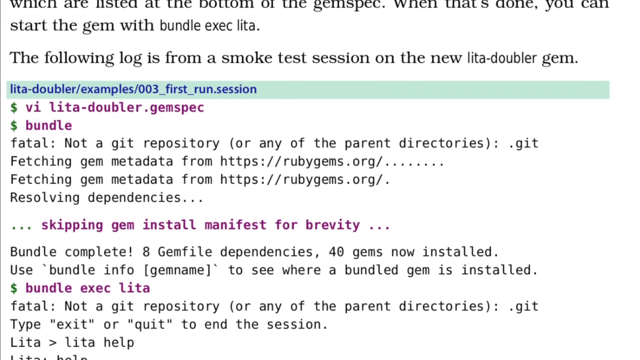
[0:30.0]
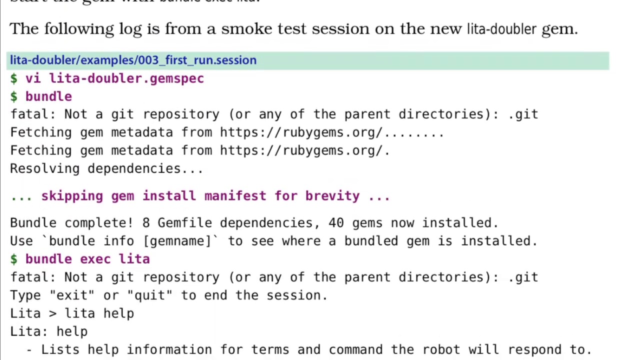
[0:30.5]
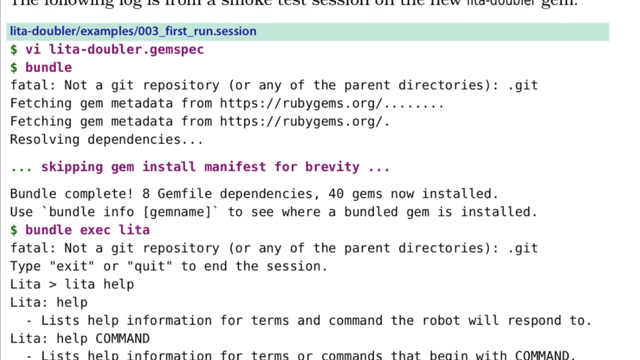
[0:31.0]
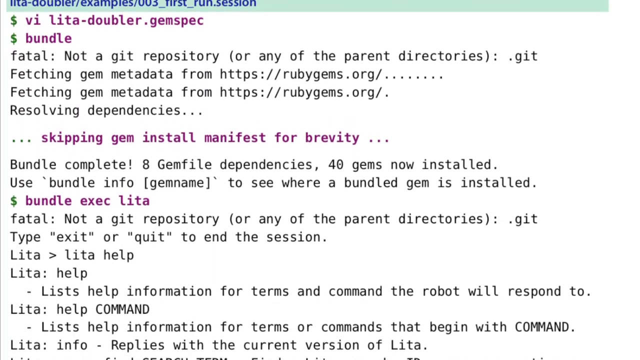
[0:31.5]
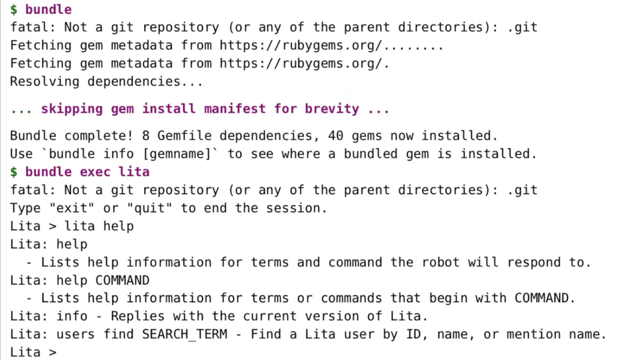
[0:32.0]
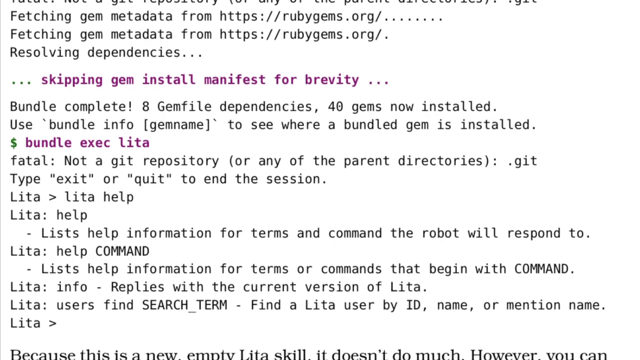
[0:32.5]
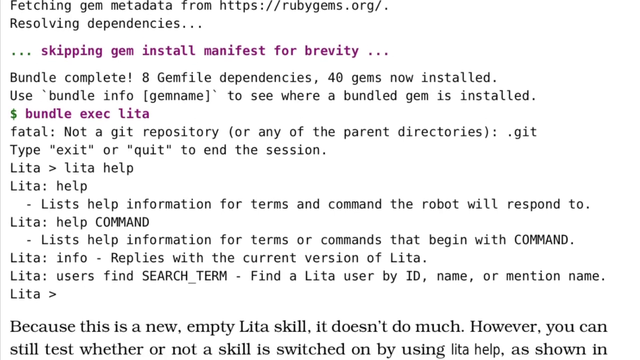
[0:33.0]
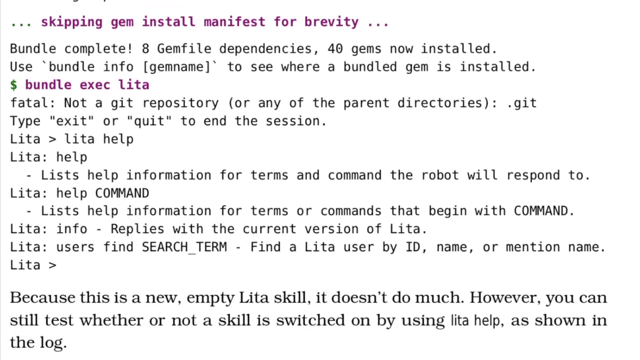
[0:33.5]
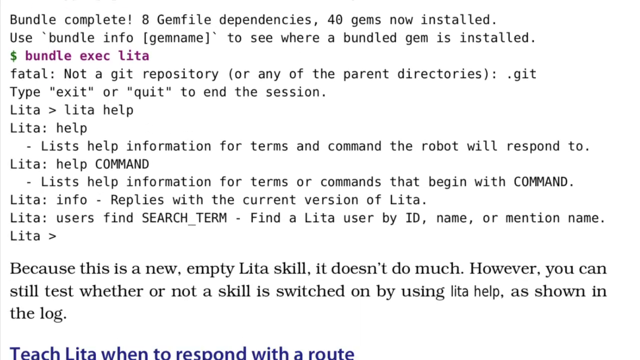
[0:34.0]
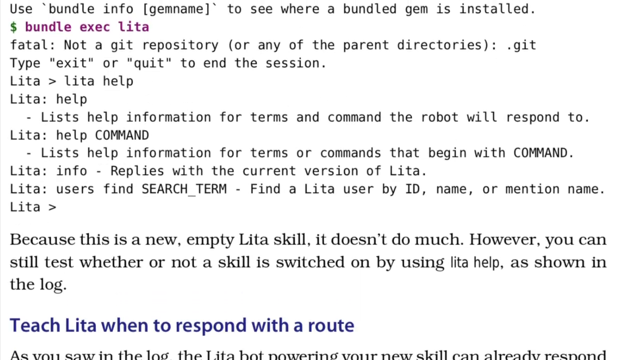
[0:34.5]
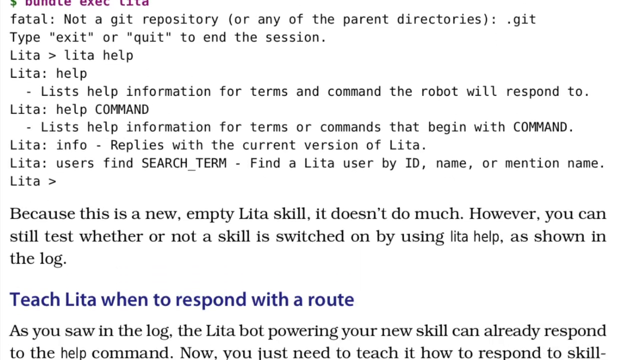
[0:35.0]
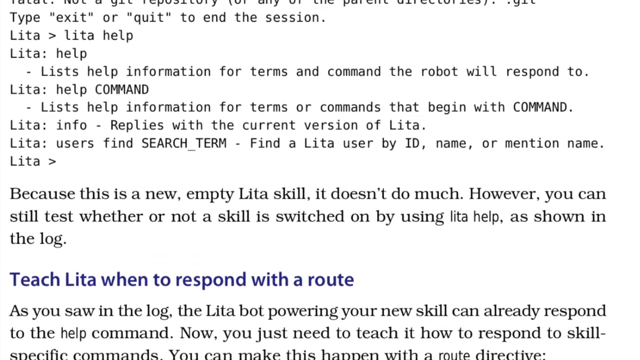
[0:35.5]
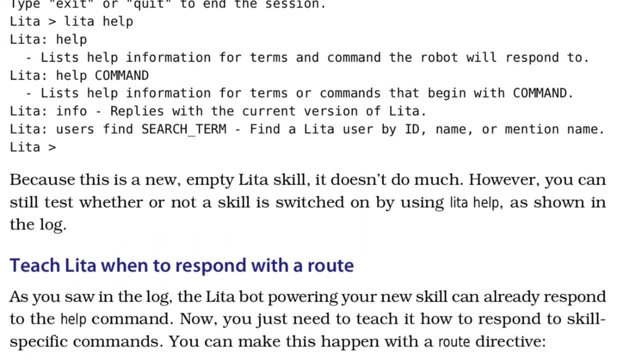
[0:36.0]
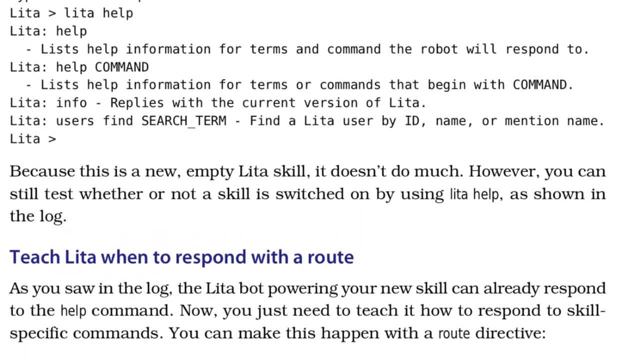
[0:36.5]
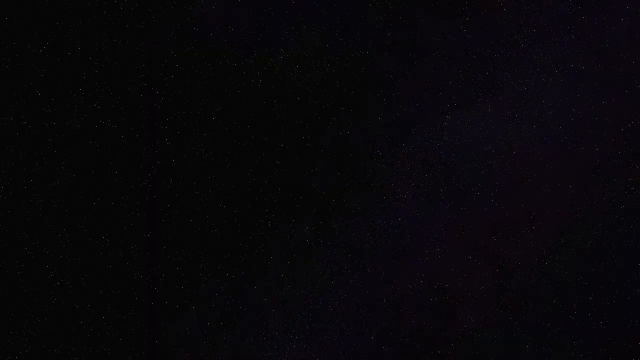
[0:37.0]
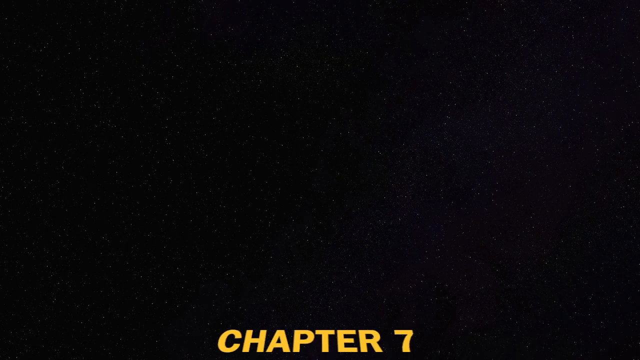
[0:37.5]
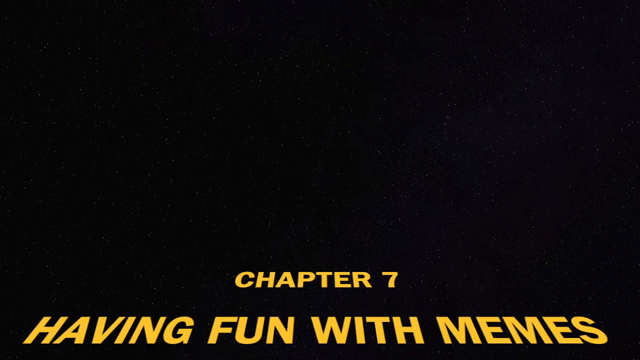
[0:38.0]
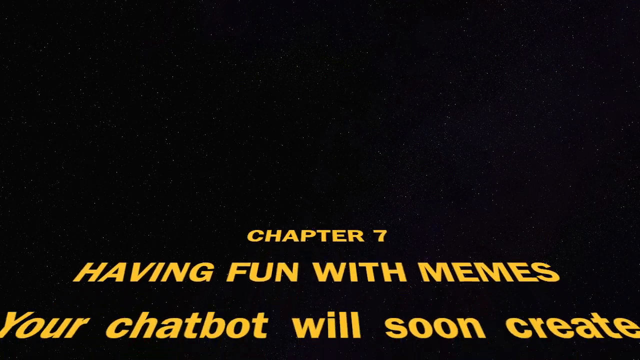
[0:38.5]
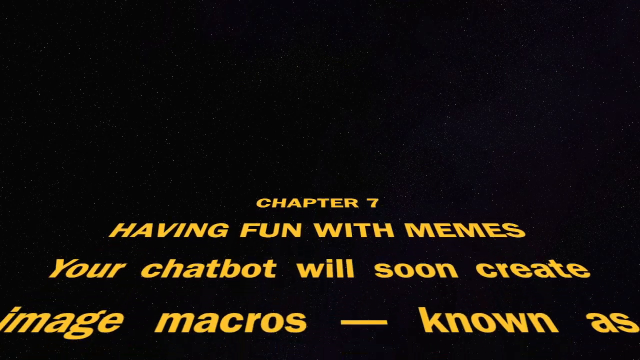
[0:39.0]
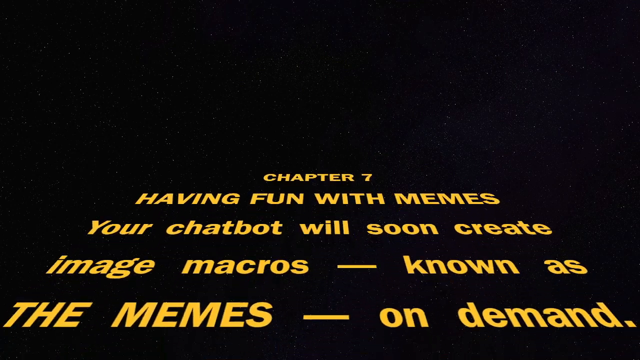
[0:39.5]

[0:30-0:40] A white page with black text appears. The text at the top reads "which are listed at the bottom of the gem spec. When that's done, you can start the gem with bundle exec lita. The following log is from a smoke test session on the new lita-doubler gem." This is followed by what appears to be code for lita-doubler.gemspec, in purple and black text. The page scrolls up and continues with code, ending with the text "because this is a new empty lita skill, it doesn't do much. However, you can still test whether or not a skill is switched on by using lita help, as shown in the log."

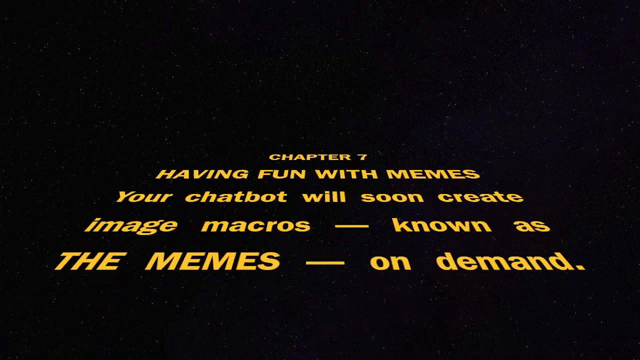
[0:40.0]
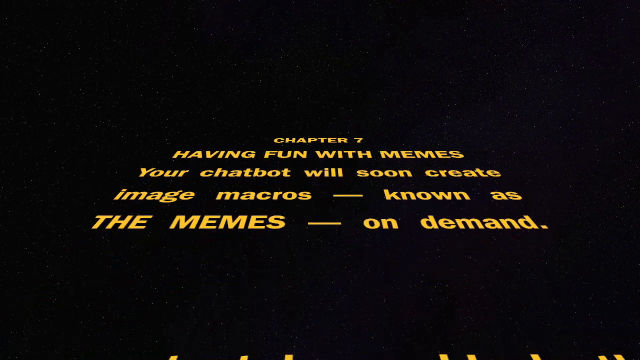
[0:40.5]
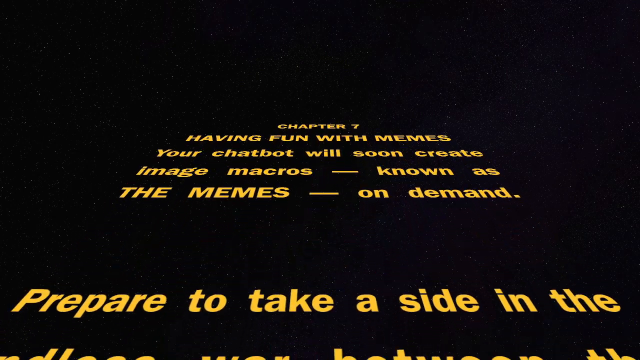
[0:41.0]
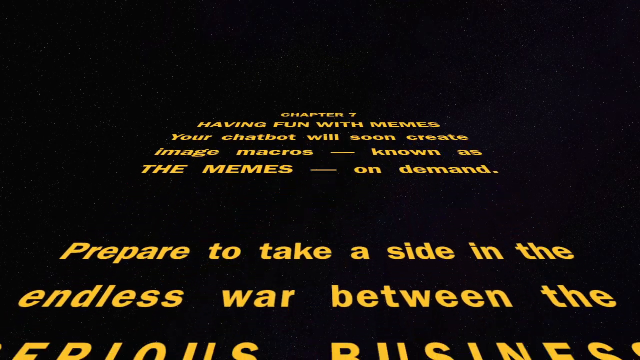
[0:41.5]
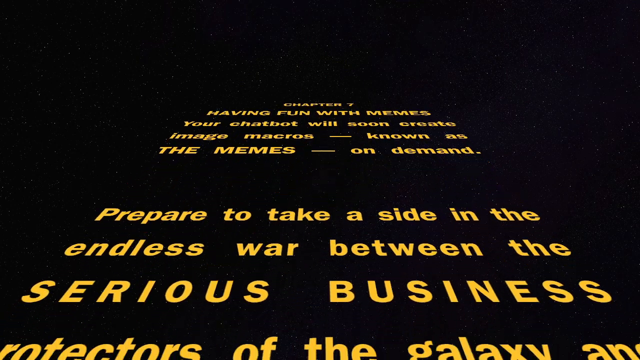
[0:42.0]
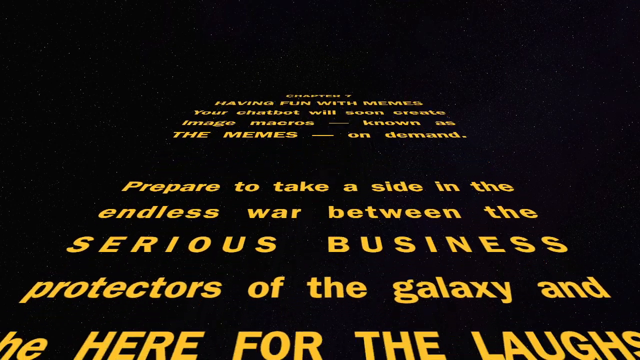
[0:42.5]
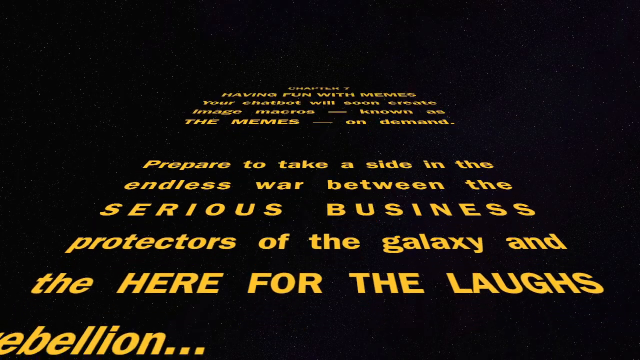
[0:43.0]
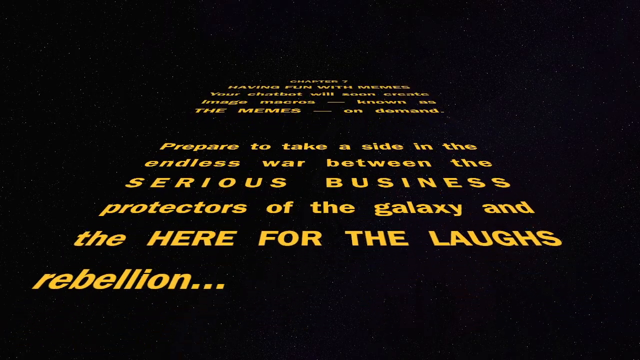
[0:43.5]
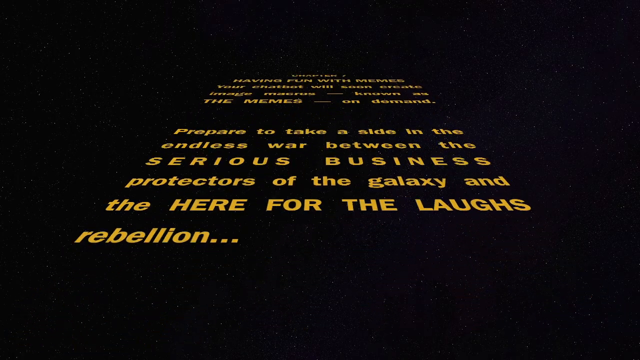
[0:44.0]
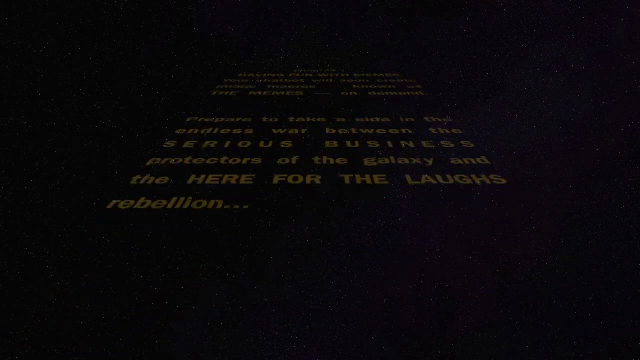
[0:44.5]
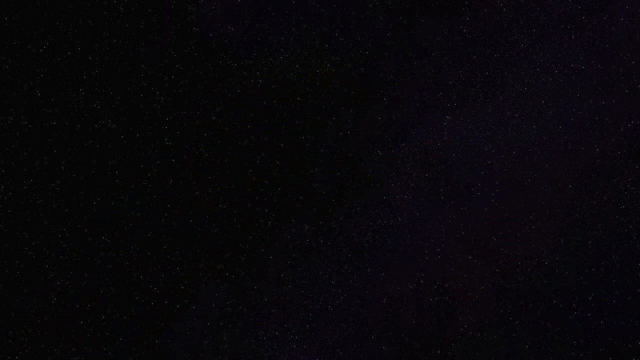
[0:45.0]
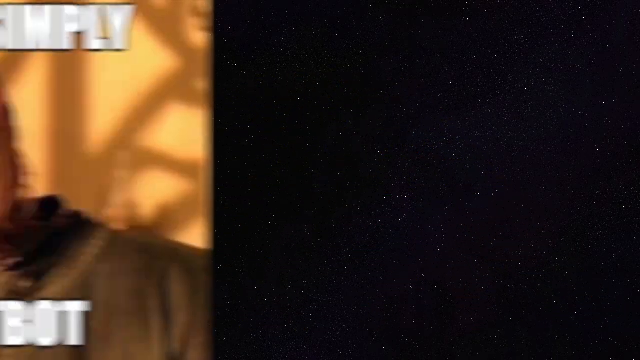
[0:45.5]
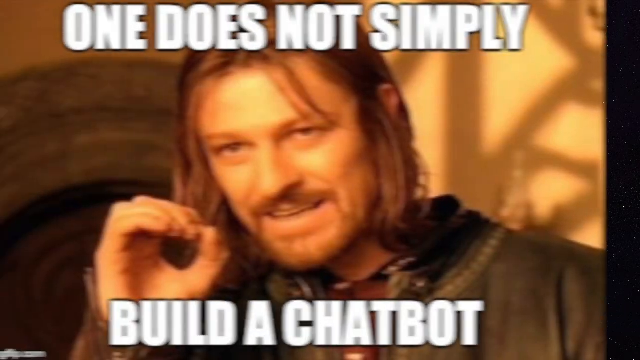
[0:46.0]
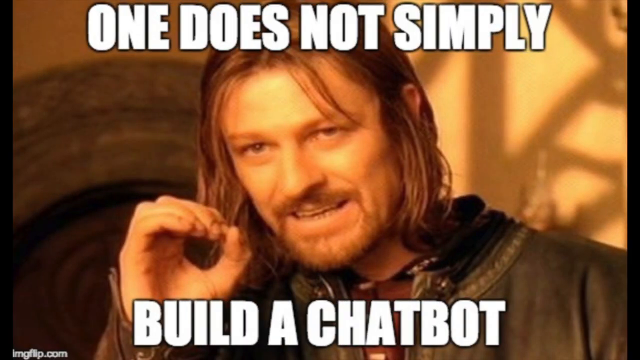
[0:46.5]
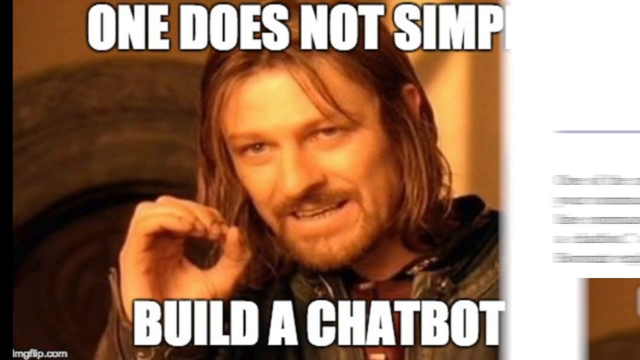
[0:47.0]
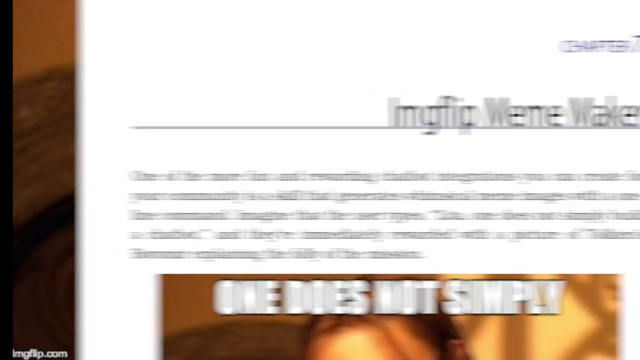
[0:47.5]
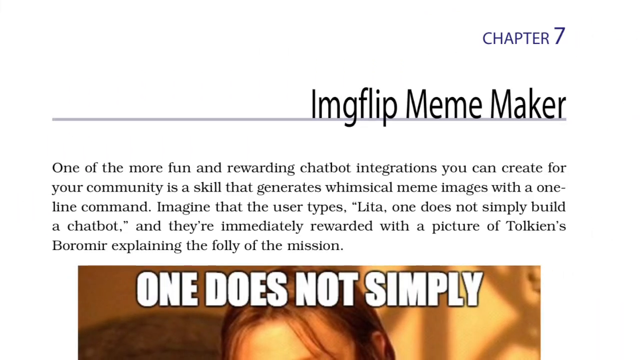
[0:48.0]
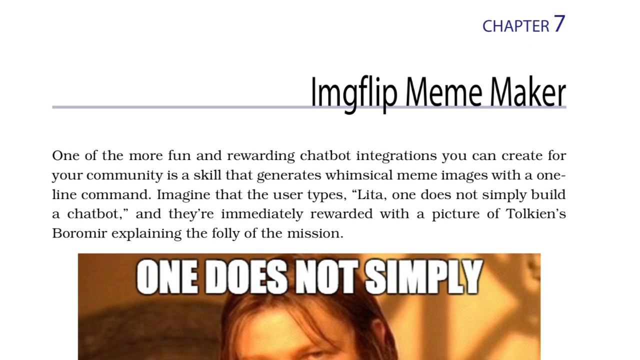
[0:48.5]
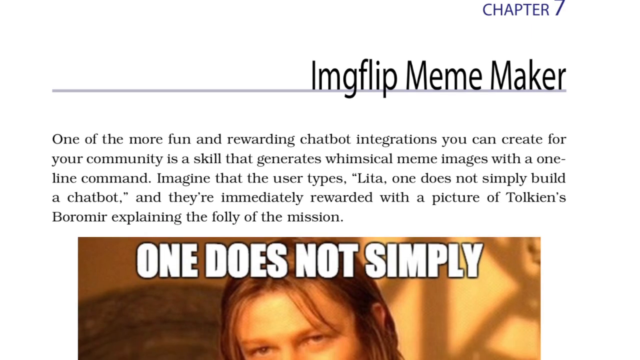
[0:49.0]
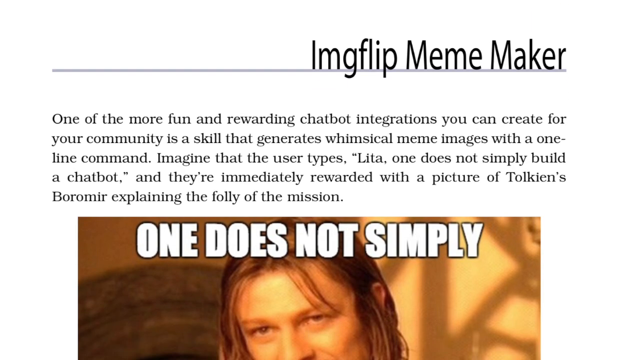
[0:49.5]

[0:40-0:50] A black screen with yellow text appears. The text reads "Chapter 7, Having Fun With Memes. Your chatbot will soon create image macros — known as The Memes — On Demand." It scrolls from the bottom of the screen upward, not face-on but seen on a slant, almost as if printed on a sheet that is slightly lifted. It continues with "prepared to take a side in the endless war between the serious business protectors of the galaxy and". The screen then goes black, and a meme appears reading "one does not simply build a chatbot." This transitions to a page with text.